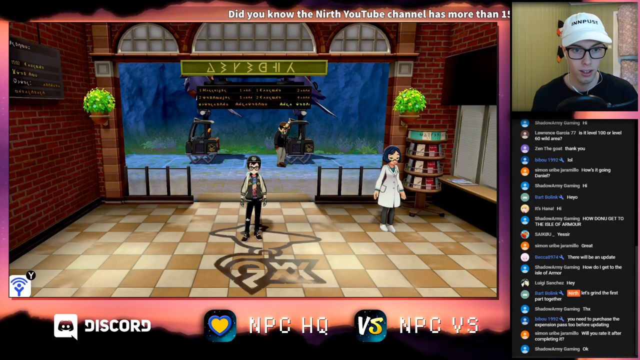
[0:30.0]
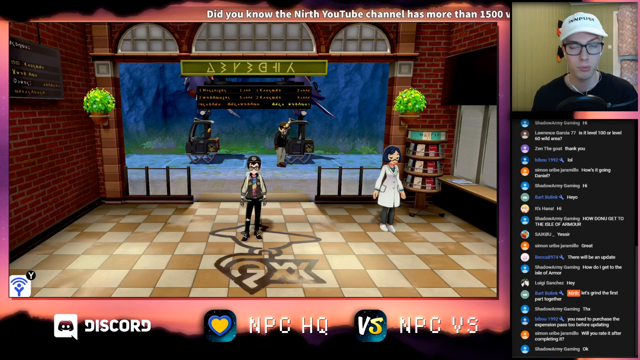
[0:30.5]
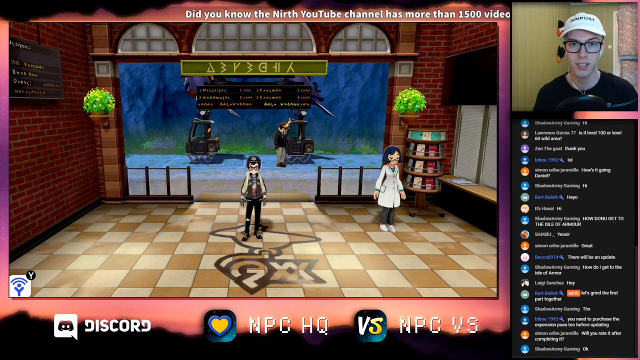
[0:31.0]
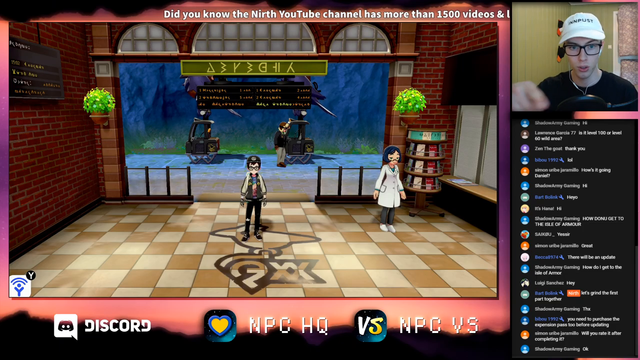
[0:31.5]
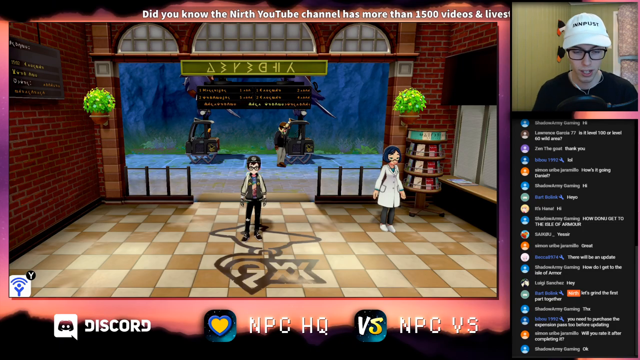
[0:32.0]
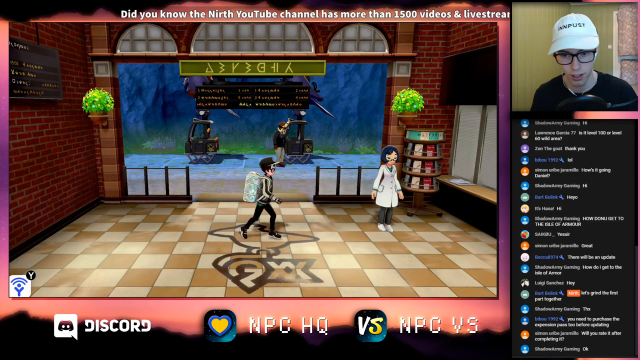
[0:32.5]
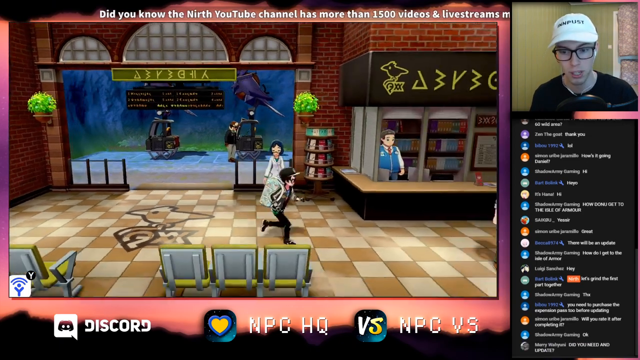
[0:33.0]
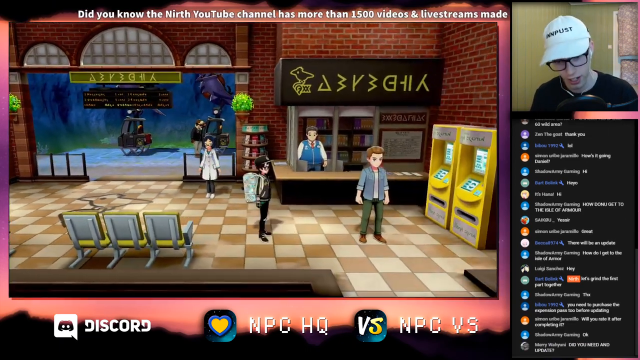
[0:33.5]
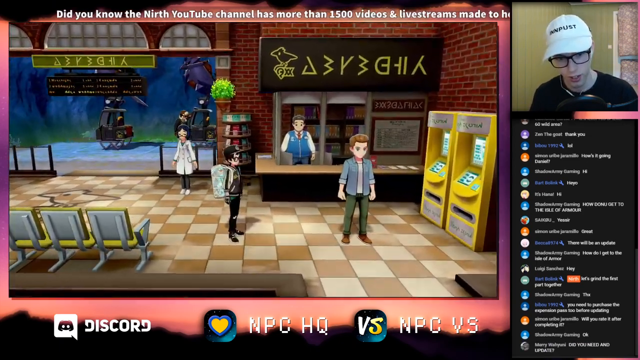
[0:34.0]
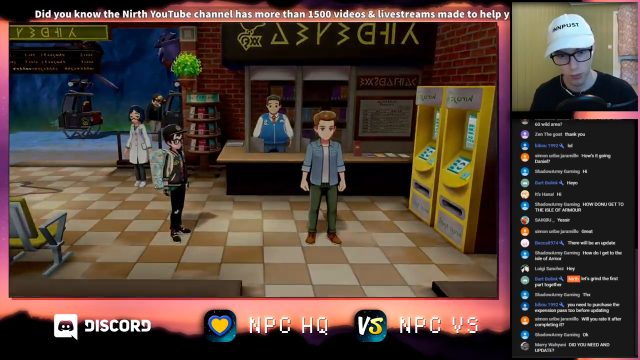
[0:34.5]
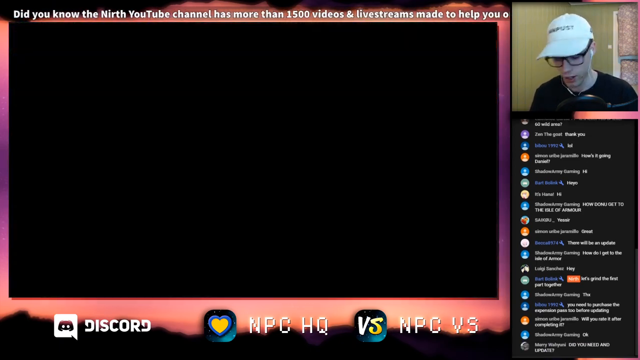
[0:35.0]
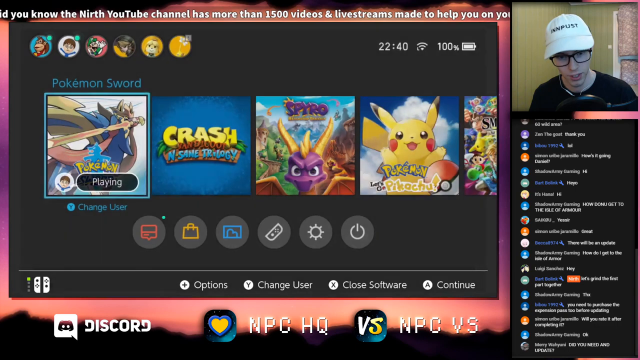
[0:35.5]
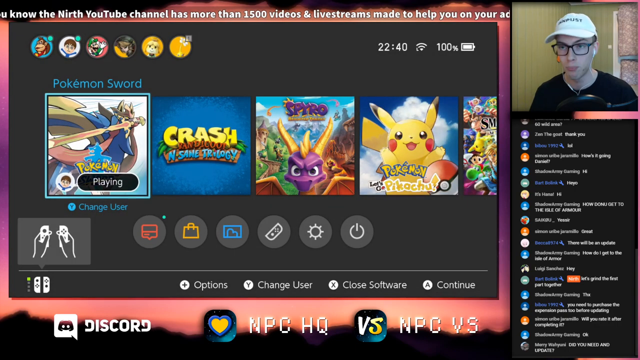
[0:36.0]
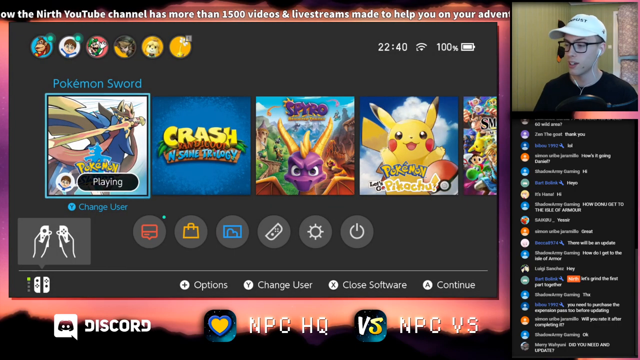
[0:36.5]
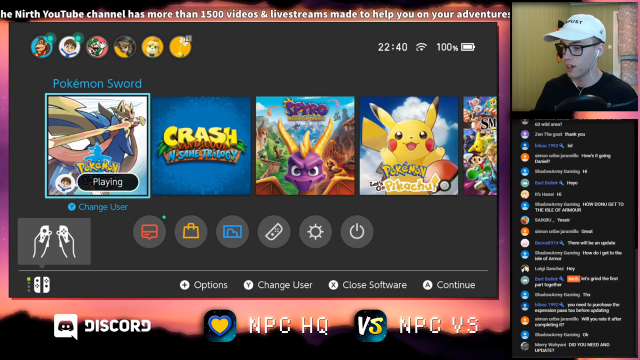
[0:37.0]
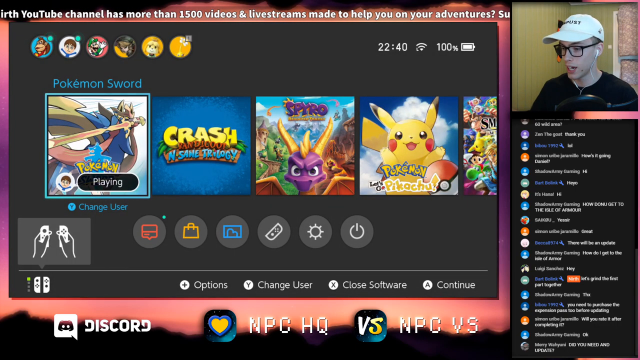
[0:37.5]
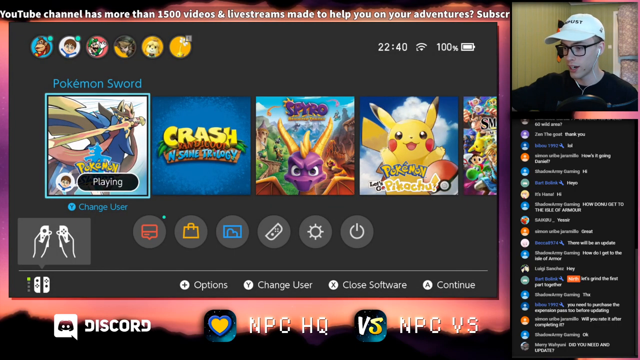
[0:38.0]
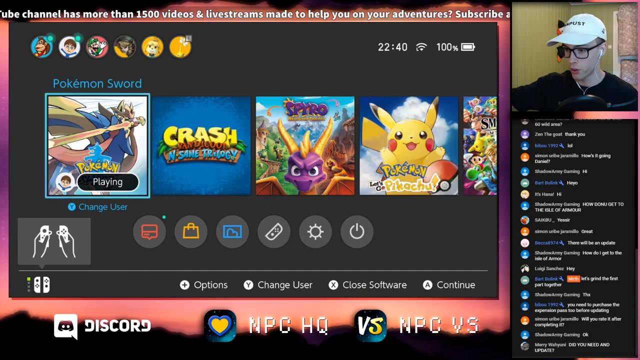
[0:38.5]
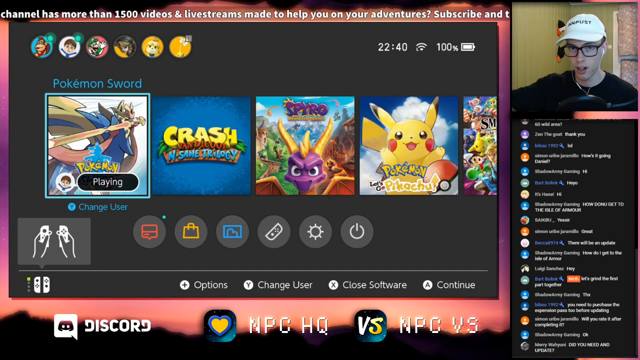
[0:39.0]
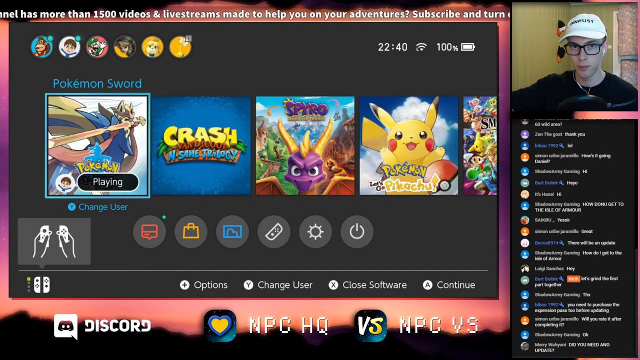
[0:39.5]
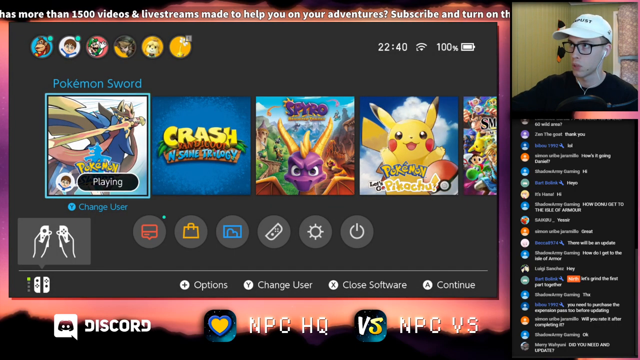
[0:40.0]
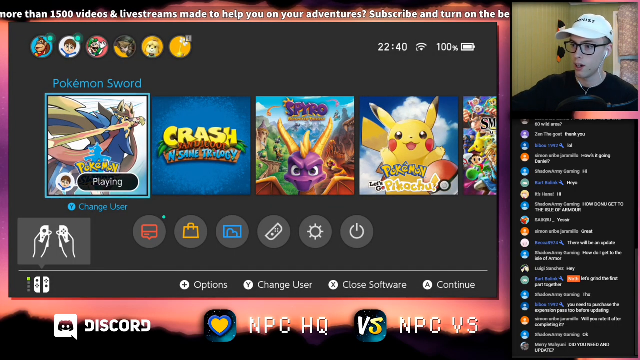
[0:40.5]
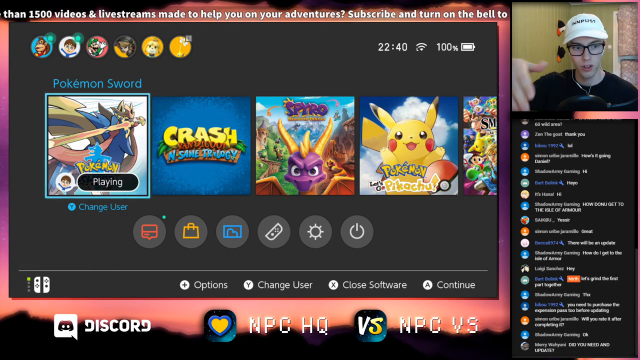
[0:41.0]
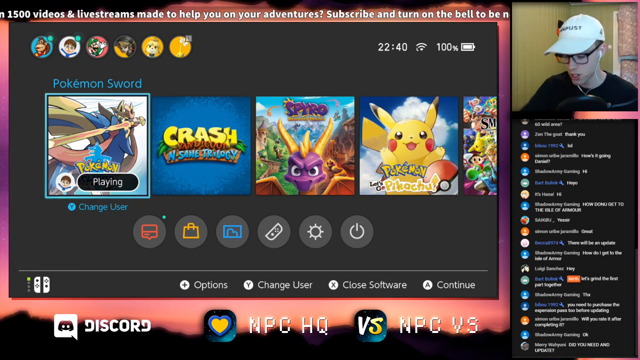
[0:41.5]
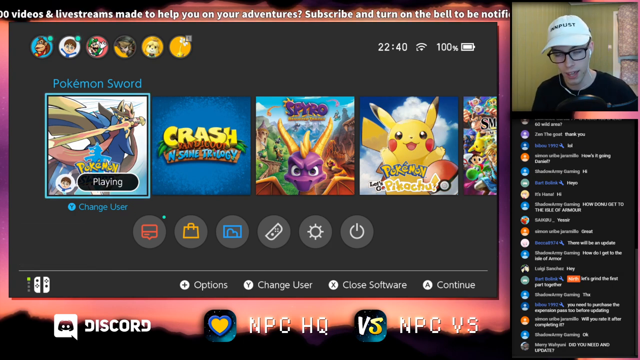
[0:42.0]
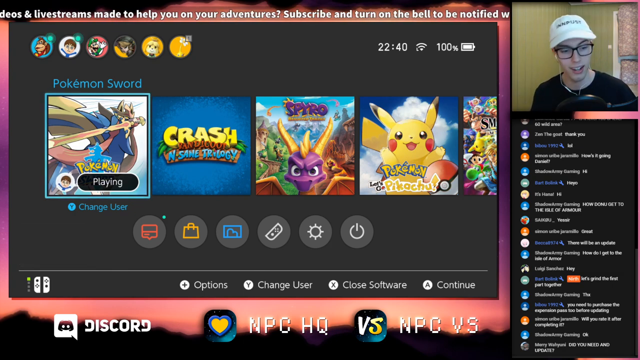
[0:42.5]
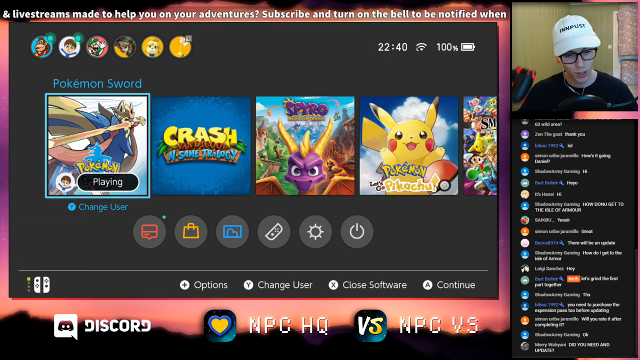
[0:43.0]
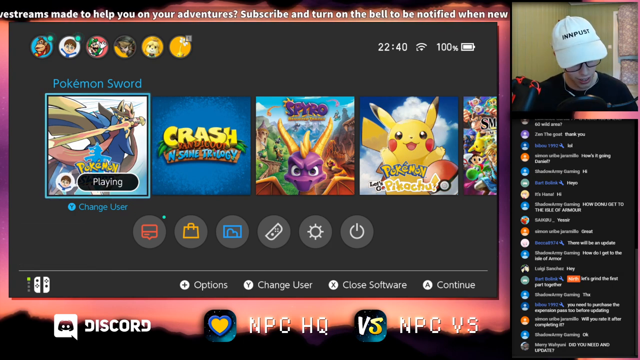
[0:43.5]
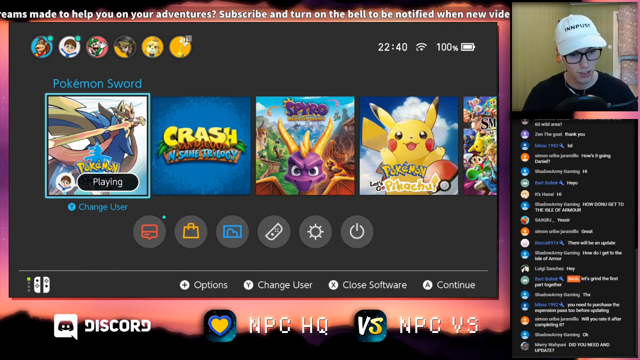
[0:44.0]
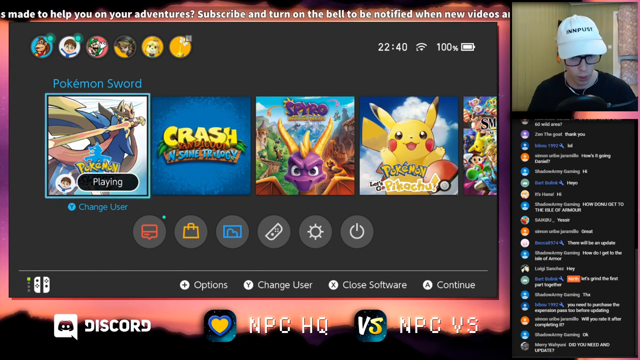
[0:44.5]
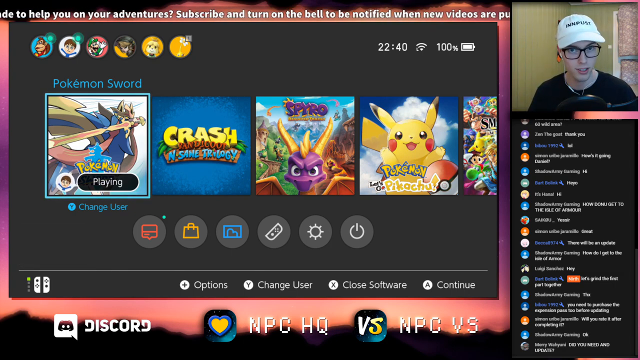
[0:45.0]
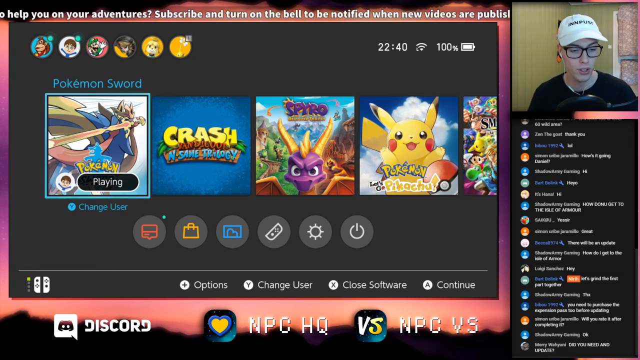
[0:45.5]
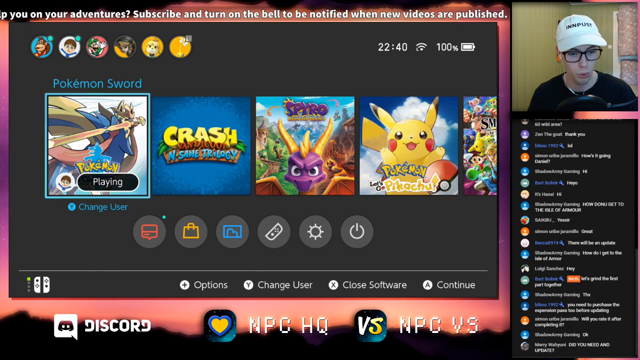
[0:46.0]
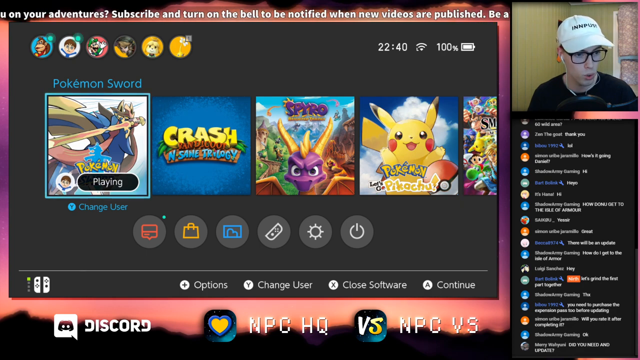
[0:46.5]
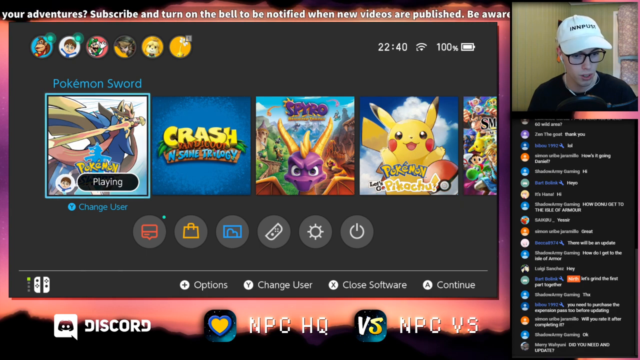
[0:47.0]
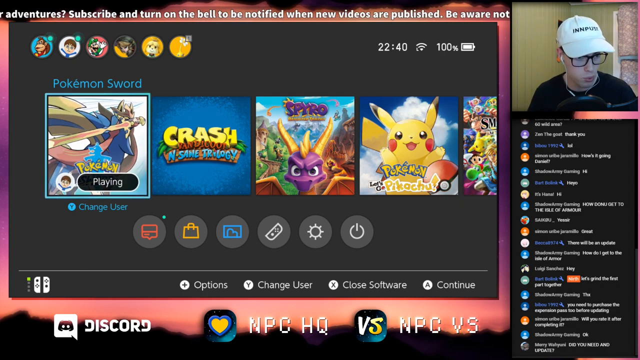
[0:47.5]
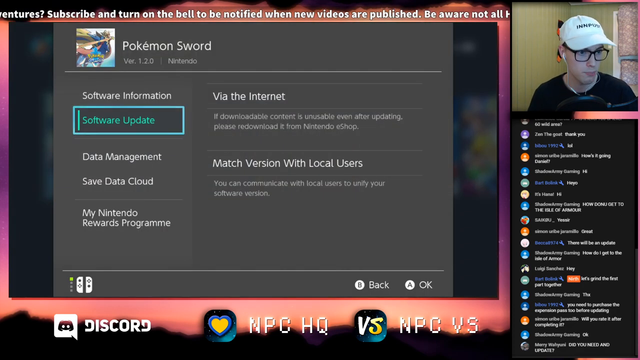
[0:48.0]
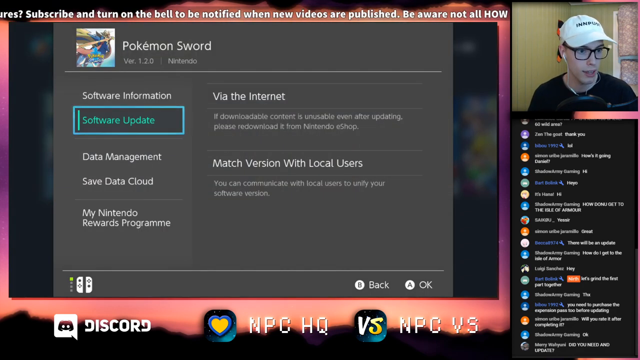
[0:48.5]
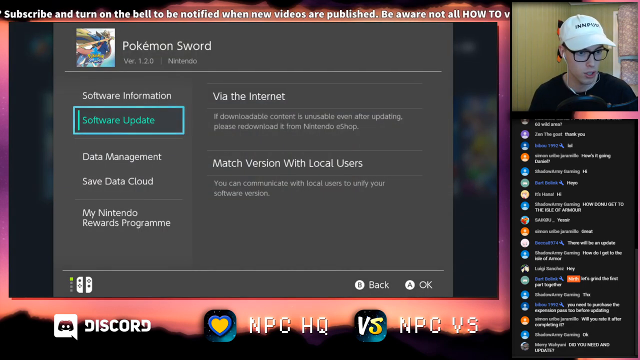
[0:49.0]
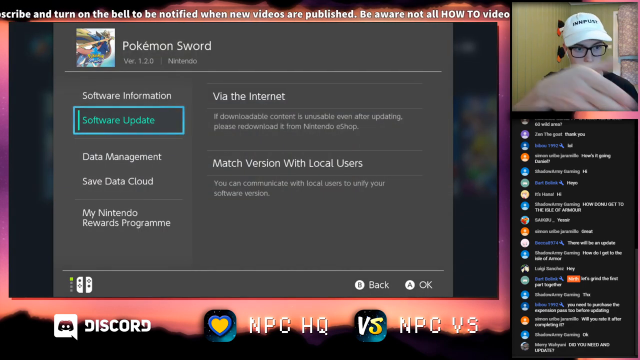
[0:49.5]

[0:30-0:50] Two characters stand on a brown and beige tiled floor inside what is apparently the station, and in the background there is what looks like two vehicles of some sort with a person standing next to them. The character being played as before, who wears a large backpack, runs across to the center of the screen. The video cuts to a menu showing that the game being played is Pokemon Sword; other games installed on the device include Crash Bandicoot, Spyro, Pokemon, Pikachu and various others. The man in the small window in the top right-hand corner of the screen talks a lot, looking both at the screen and away from it. A very brief screen pops up suggesting a software update is needed.